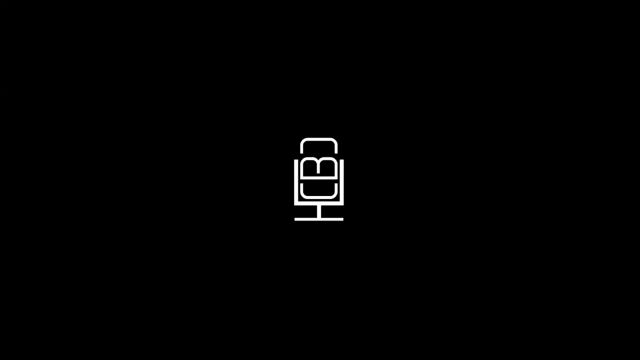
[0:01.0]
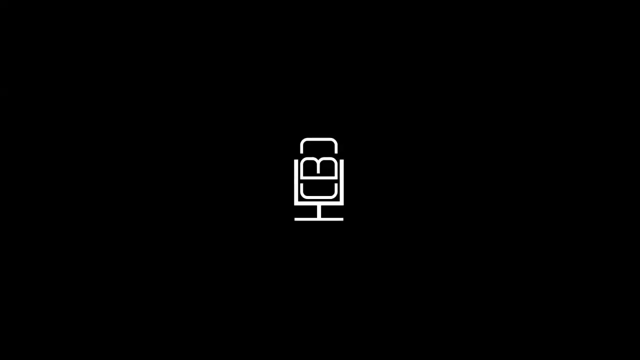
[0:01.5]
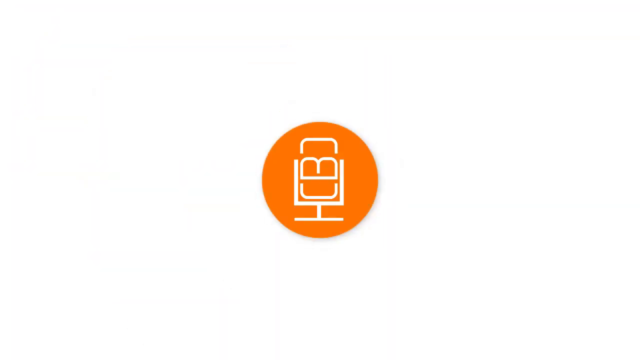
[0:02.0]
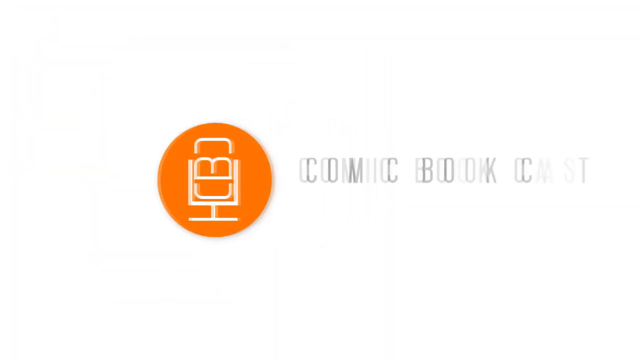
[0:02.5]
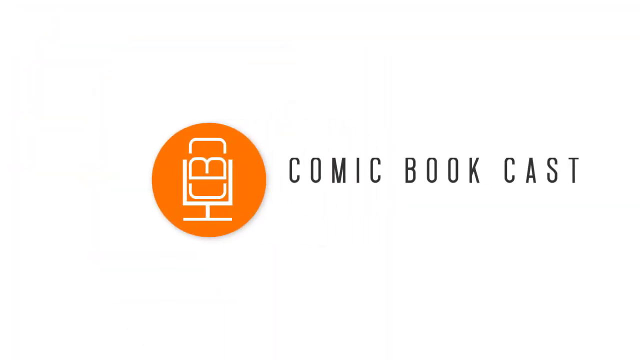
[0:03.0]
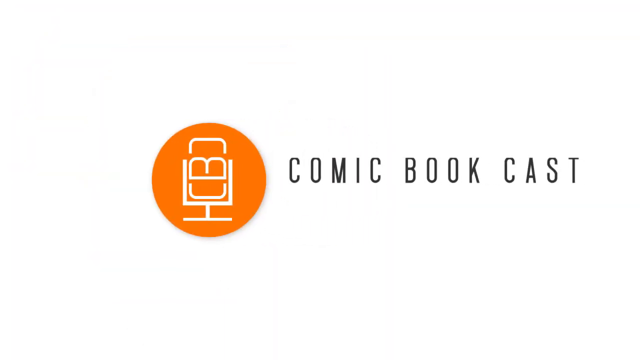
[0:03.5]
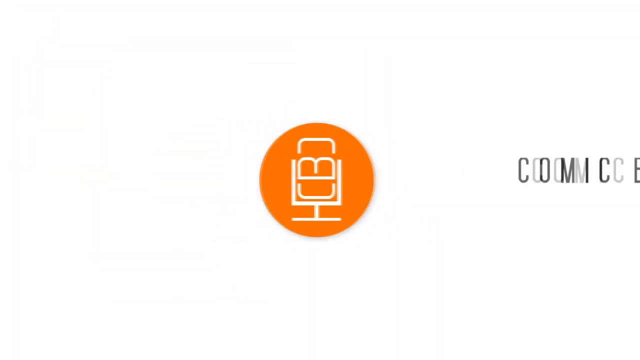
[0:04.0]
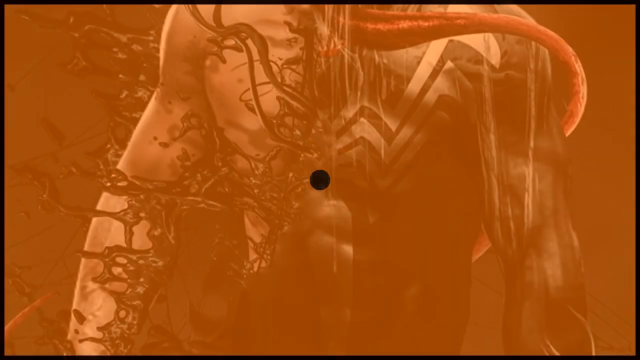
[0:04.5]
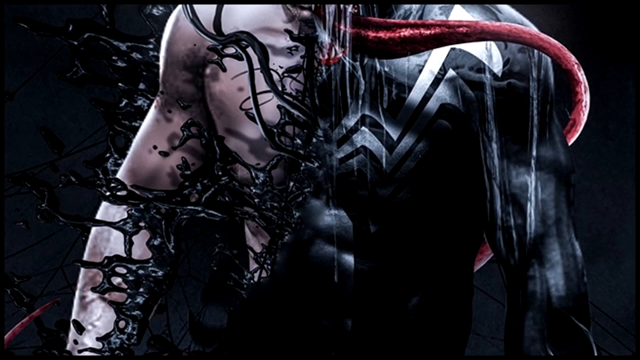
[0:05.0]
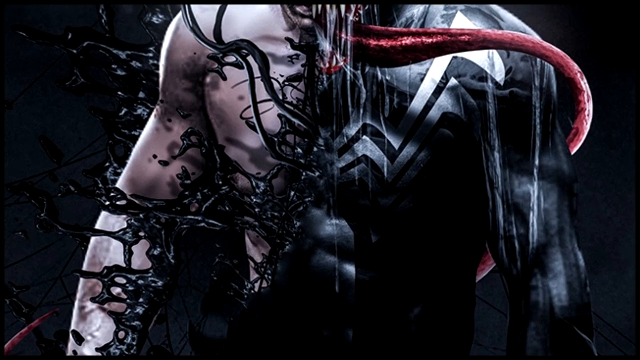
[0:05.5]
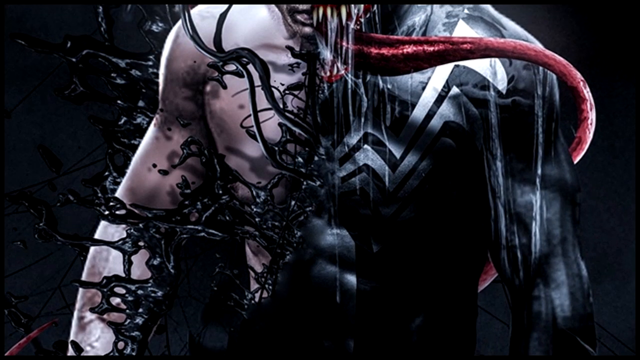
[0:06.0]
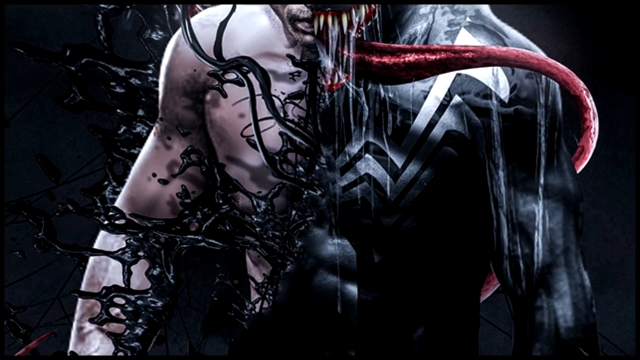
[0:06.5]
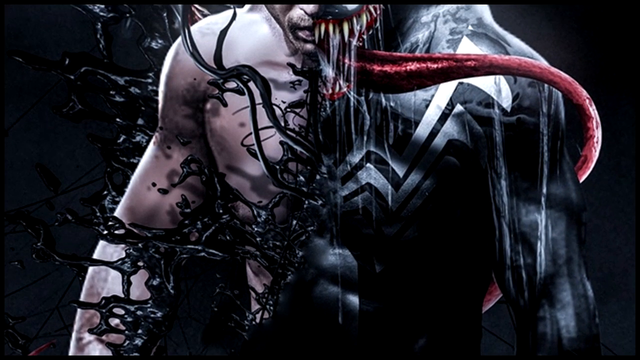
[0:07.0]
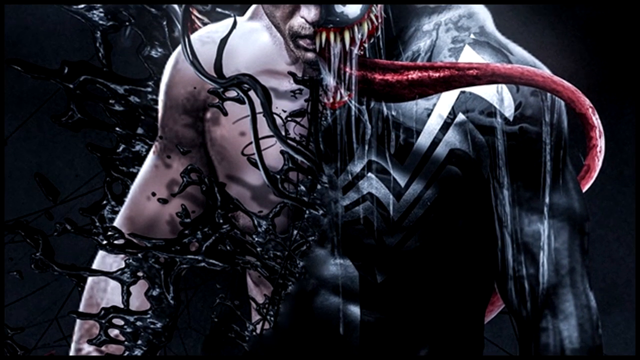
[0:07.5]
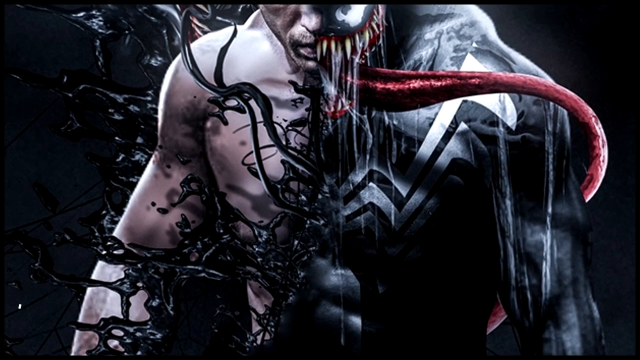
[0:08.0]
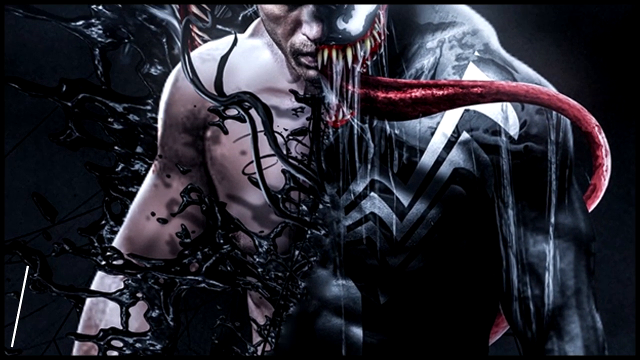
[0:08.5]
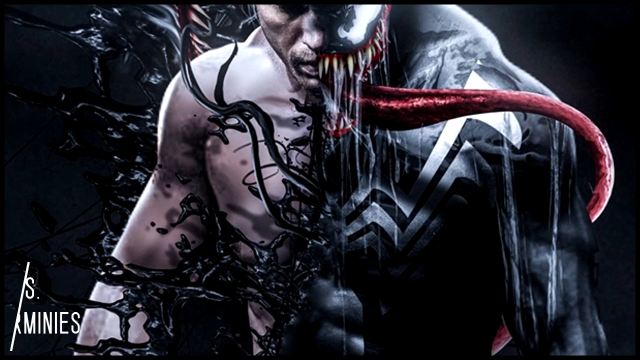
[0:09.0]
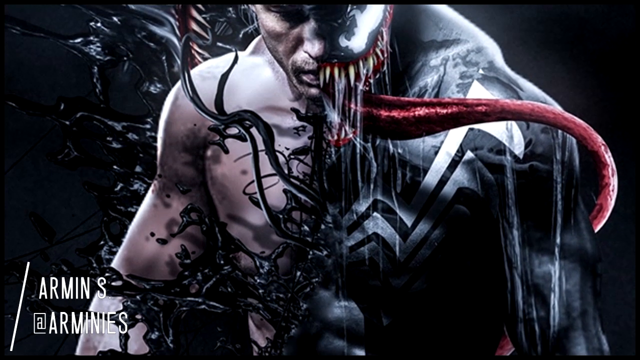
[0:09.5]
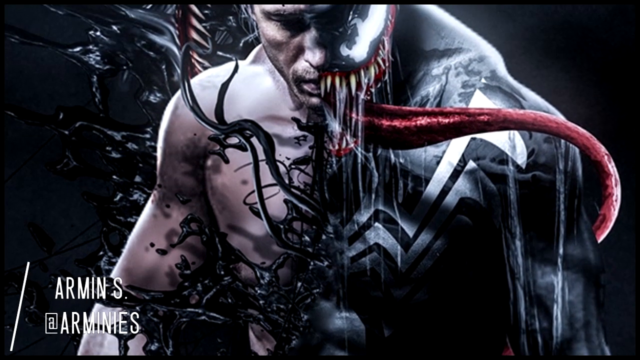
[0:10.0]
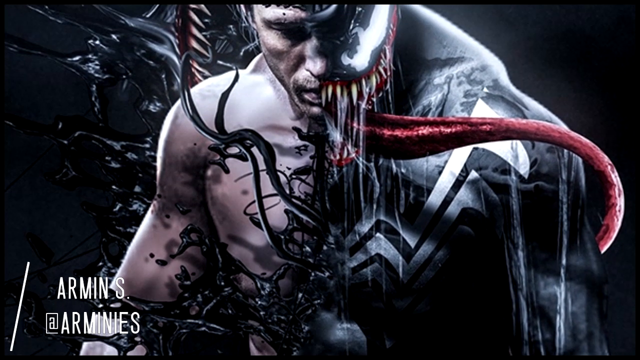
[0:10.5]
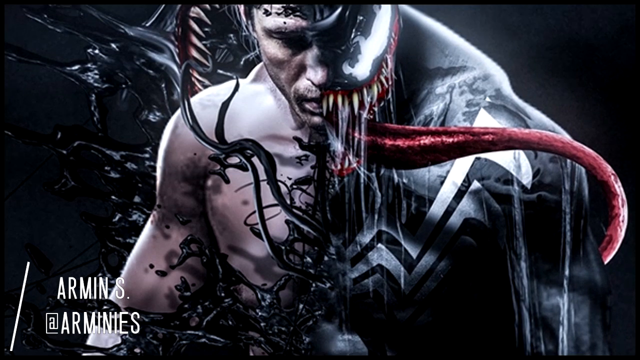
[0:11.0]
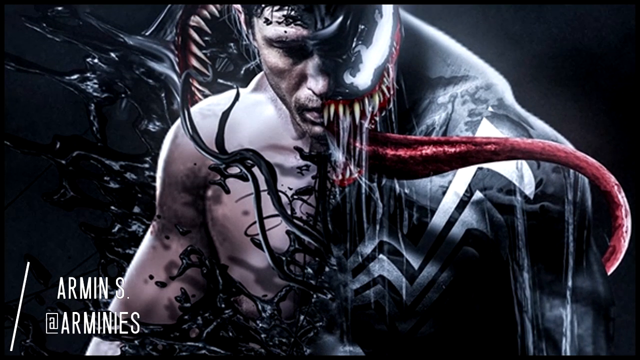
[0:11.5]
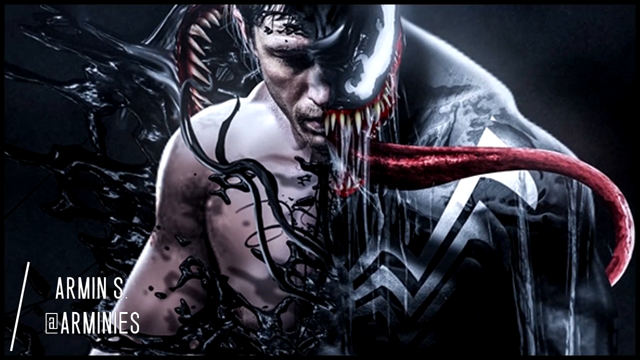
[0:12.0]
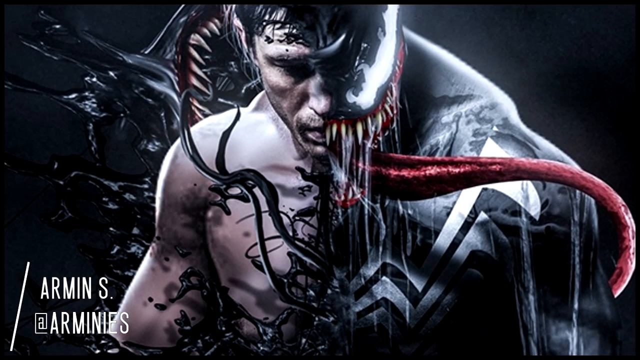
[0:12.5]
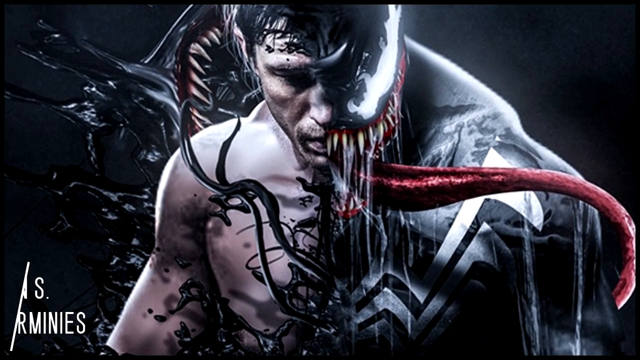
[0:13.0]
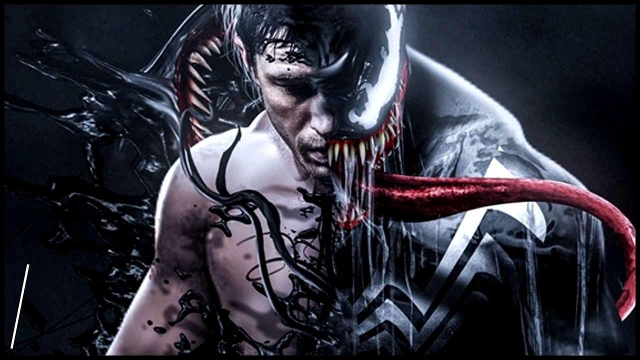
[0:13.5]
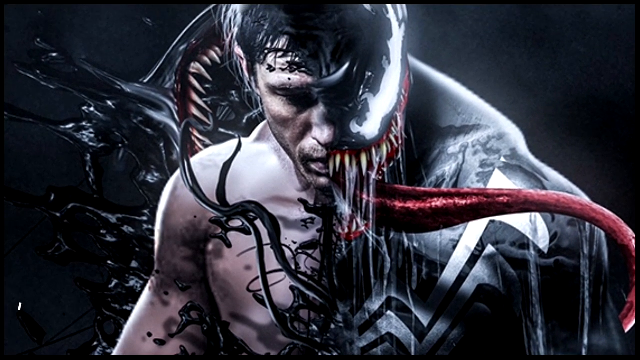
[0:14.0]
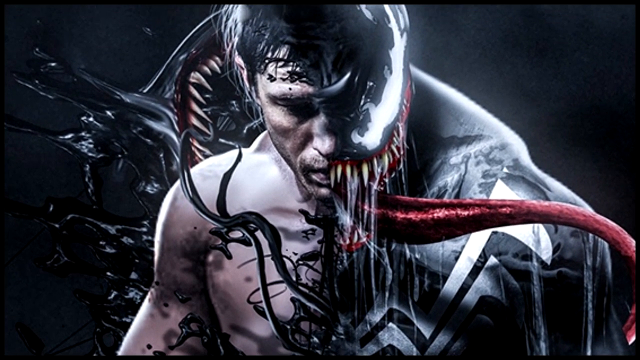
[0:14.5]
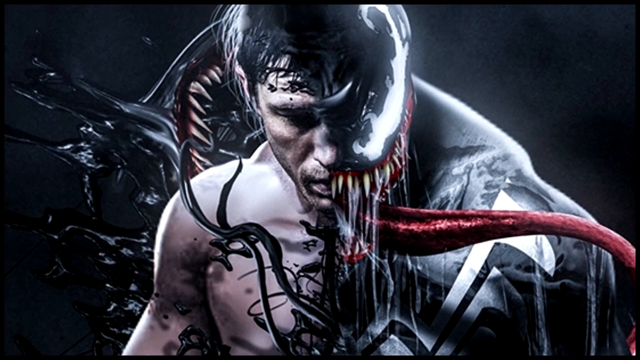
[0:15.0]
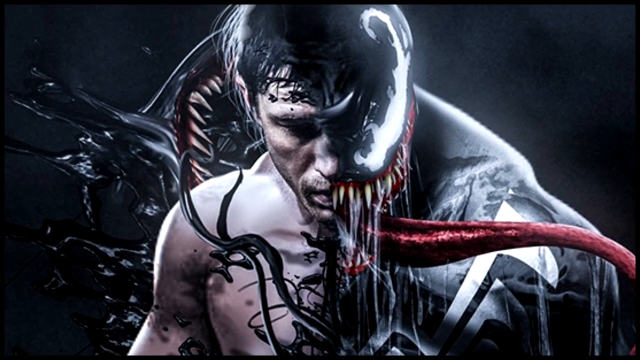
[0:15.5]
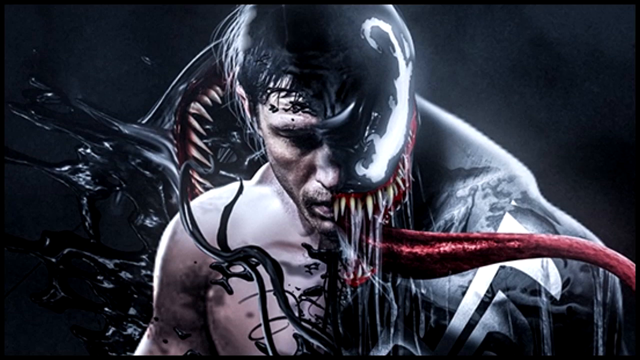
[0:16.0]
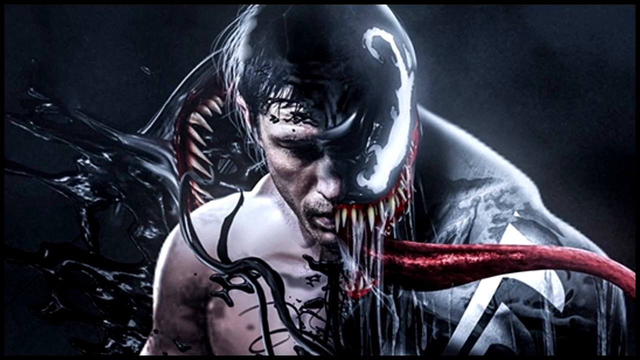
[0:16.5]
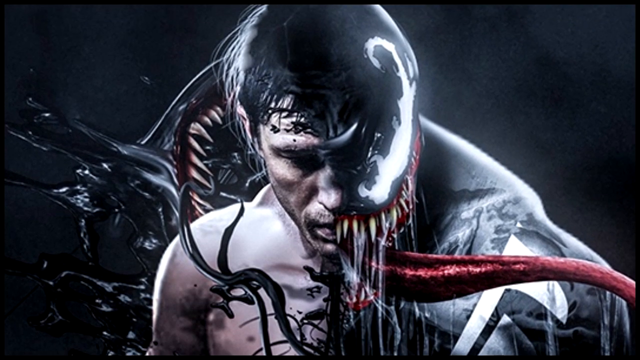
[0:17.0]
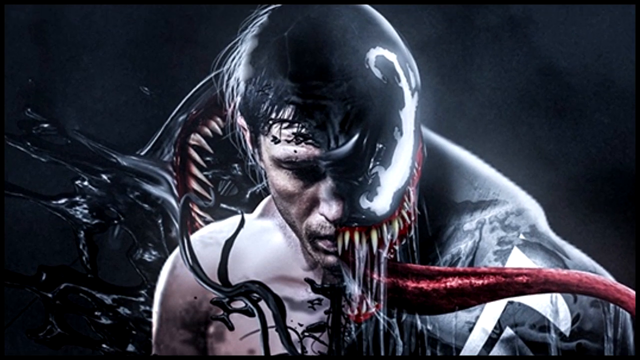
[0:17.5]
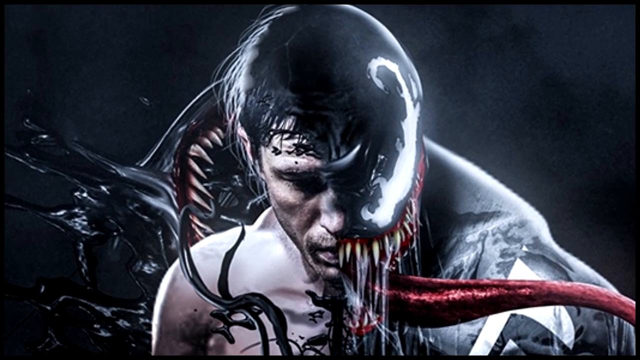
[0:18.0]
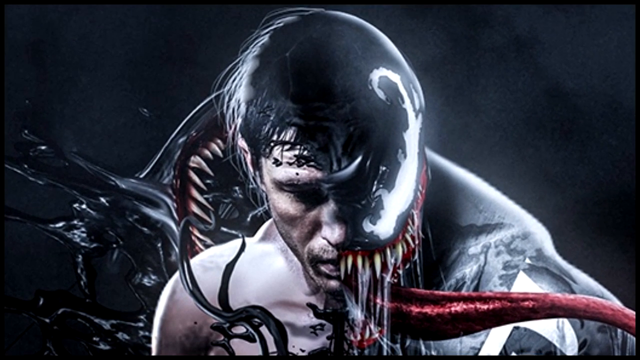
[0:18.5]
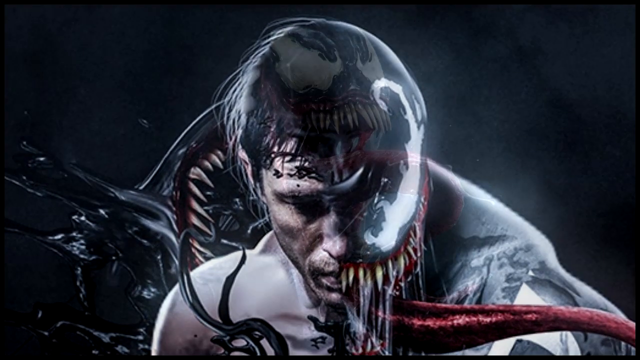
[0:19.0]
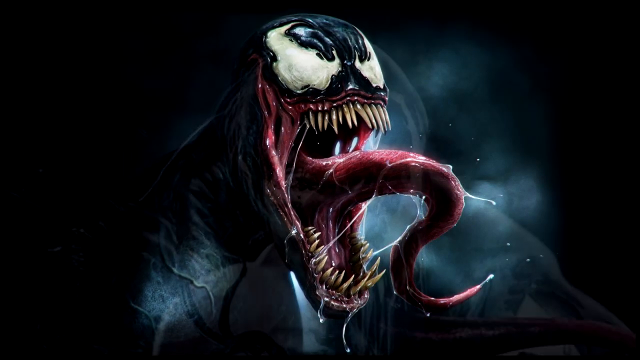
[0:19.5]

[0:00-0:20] The screen starts black, then a simple white illustration appears from the center; it looks like it could be a chair or a microphone. The black goes away and an orange circle forms around the little picture, with a darker orange circle inside the outer one, and a white background on the edges around the circle. The graphic shrinks and the words "comic book cast" appear in black to the right of the little picture. Next comes an artwork by Armen S of the character Venom, showing half a person and half the Venom creature. The person is on the left side and the other half is the black Venom creature, which resembles an alien with no eyes, just white patches where the eyes should be. The creature is mostly black and has very long fangs; all of its teeth are fangs. Drool drips from its mouth, and a massively thick, very long red tongue sort of slinks out of the mouth toward the right of the frame.